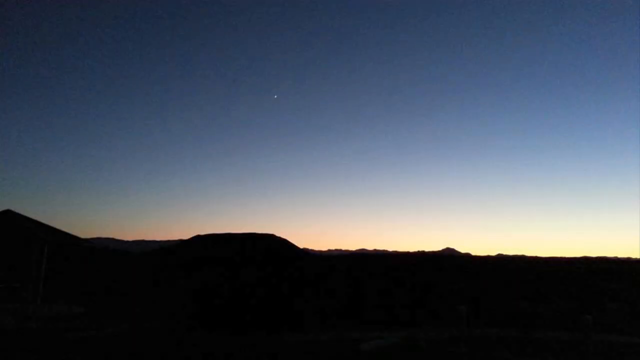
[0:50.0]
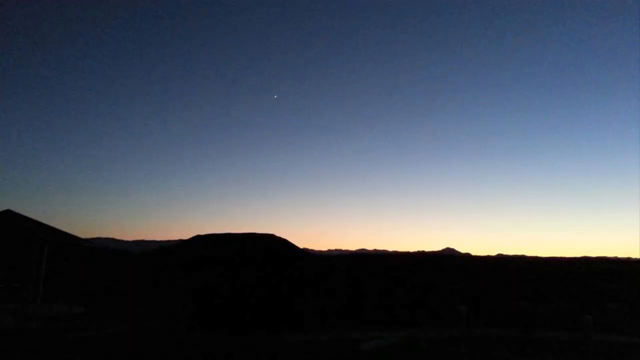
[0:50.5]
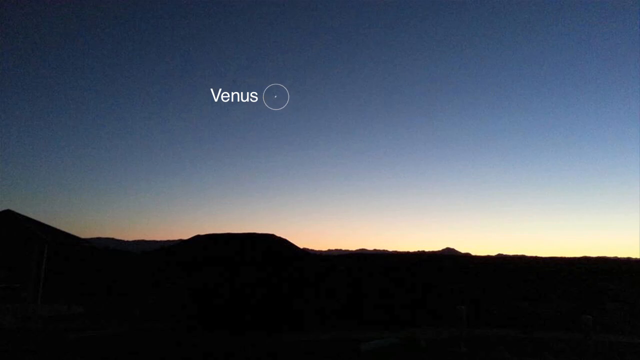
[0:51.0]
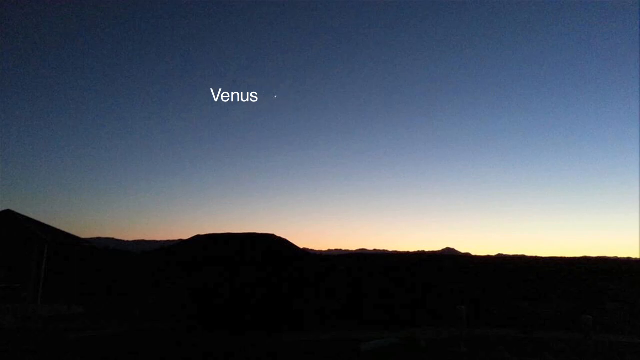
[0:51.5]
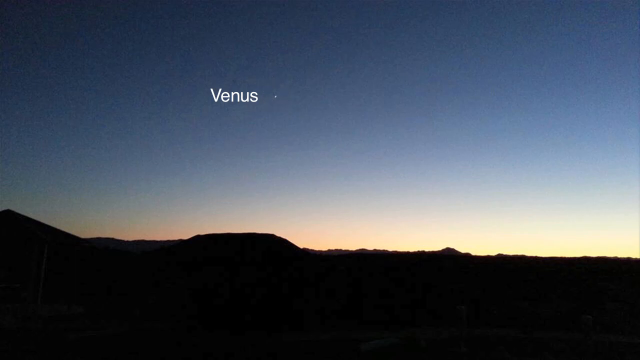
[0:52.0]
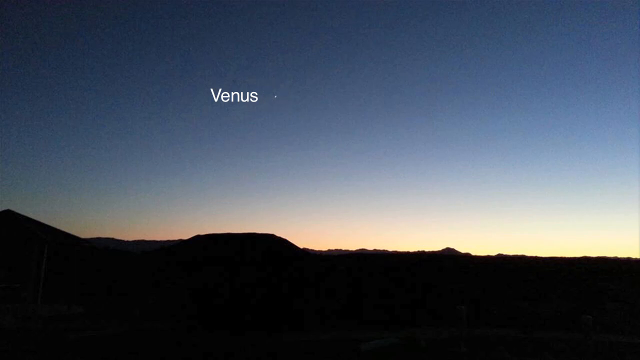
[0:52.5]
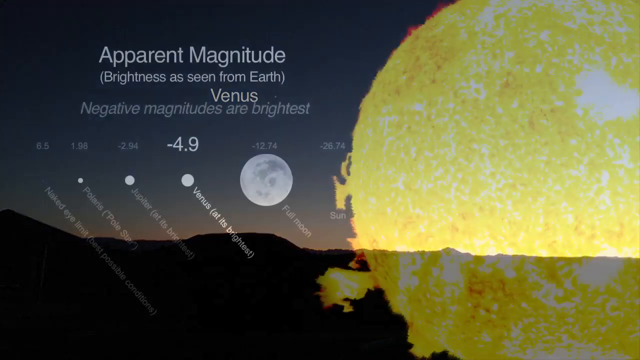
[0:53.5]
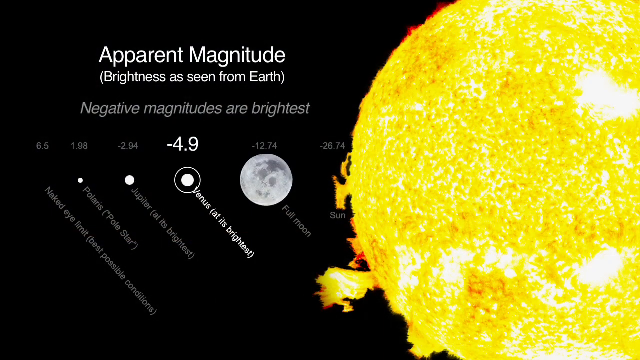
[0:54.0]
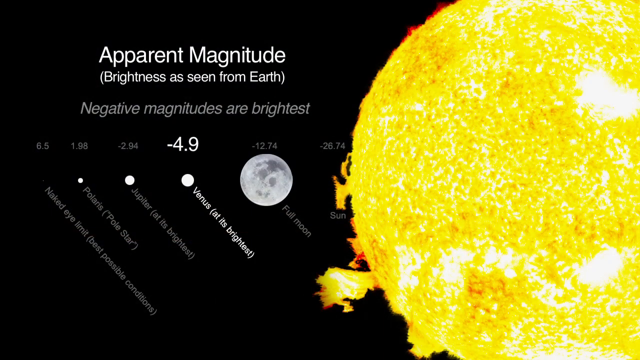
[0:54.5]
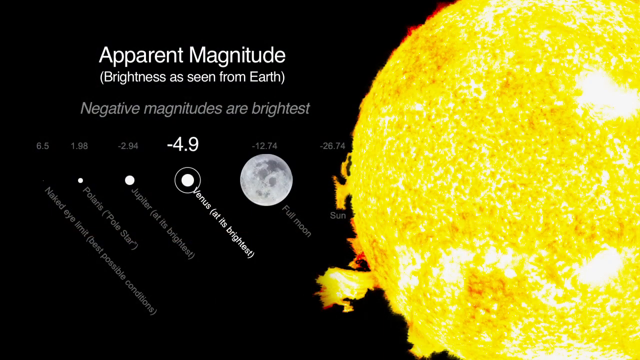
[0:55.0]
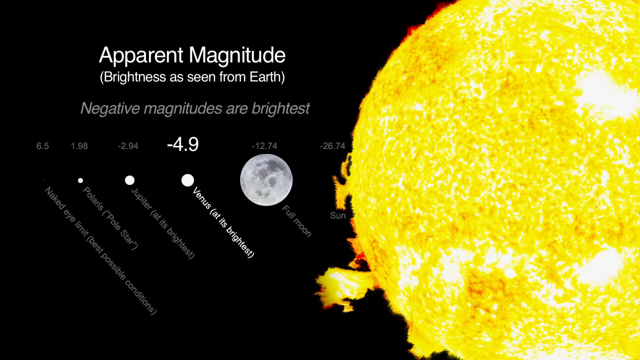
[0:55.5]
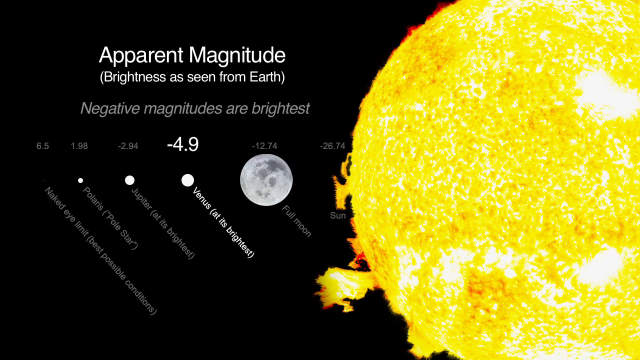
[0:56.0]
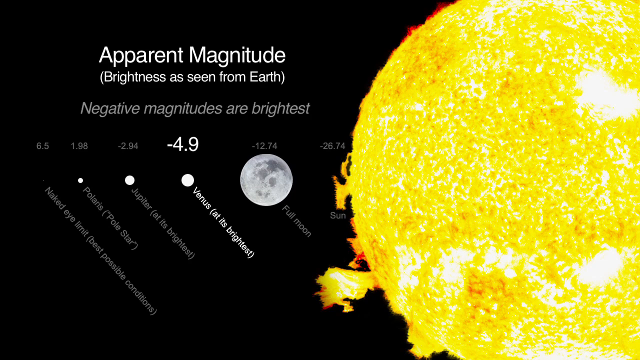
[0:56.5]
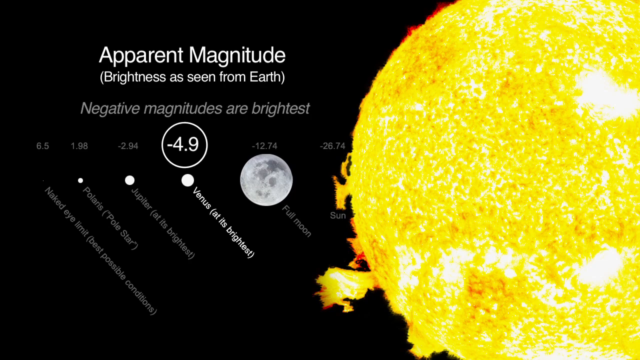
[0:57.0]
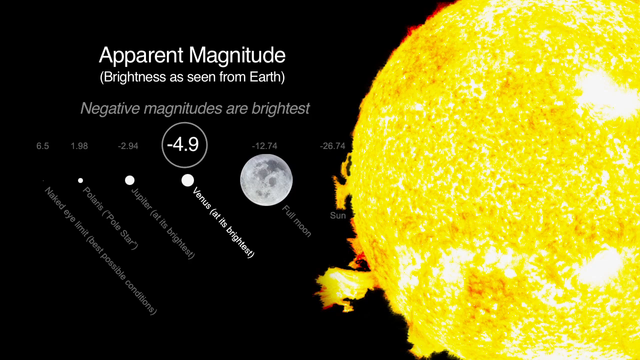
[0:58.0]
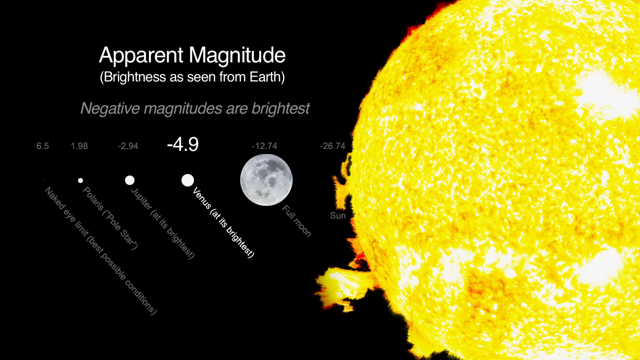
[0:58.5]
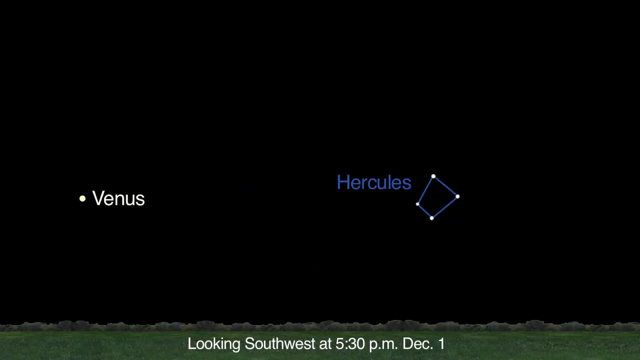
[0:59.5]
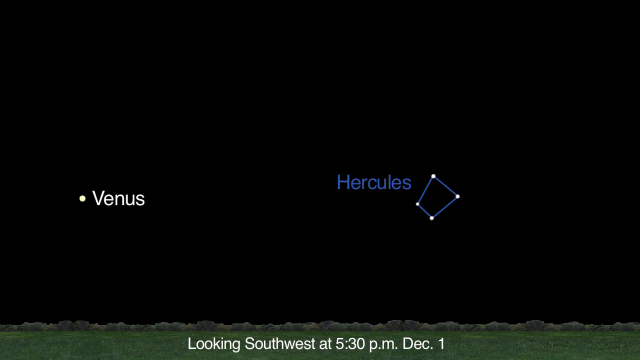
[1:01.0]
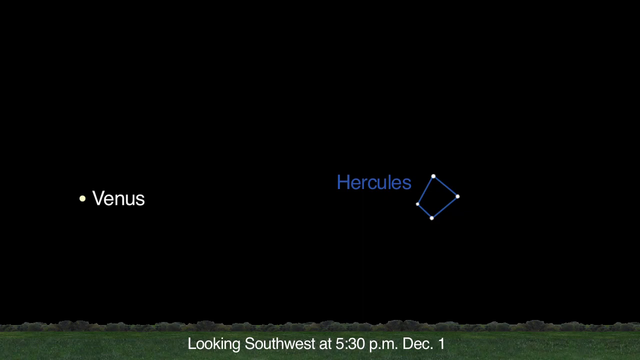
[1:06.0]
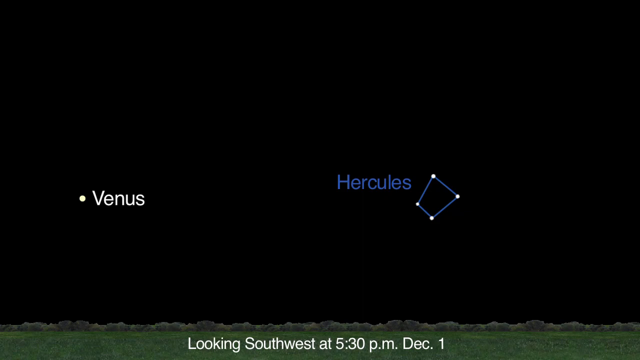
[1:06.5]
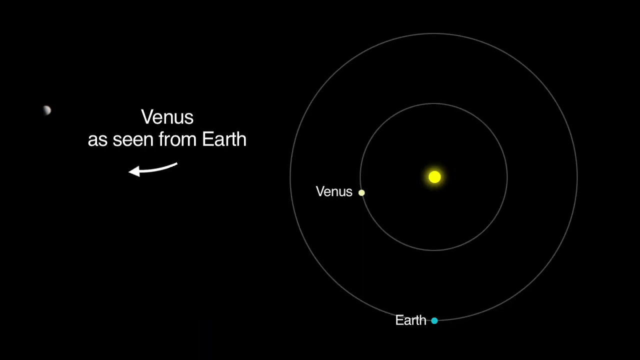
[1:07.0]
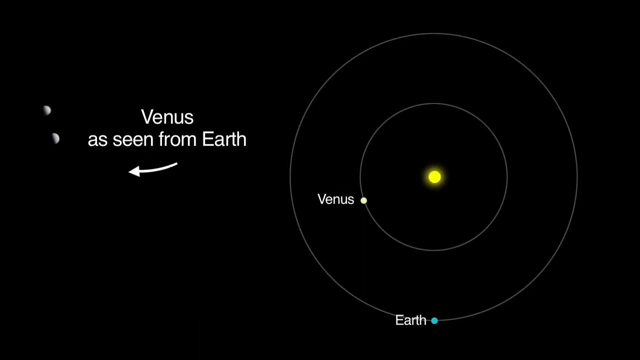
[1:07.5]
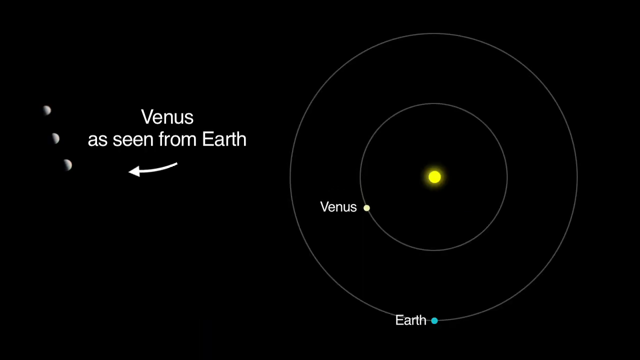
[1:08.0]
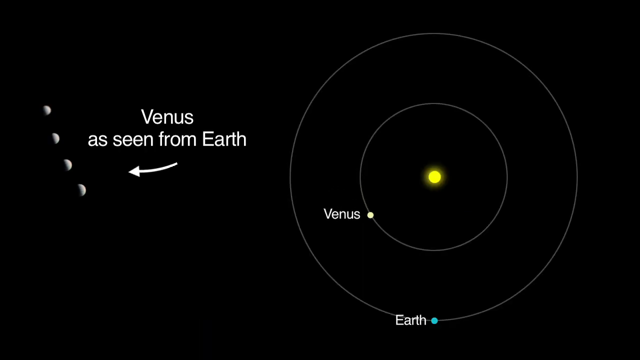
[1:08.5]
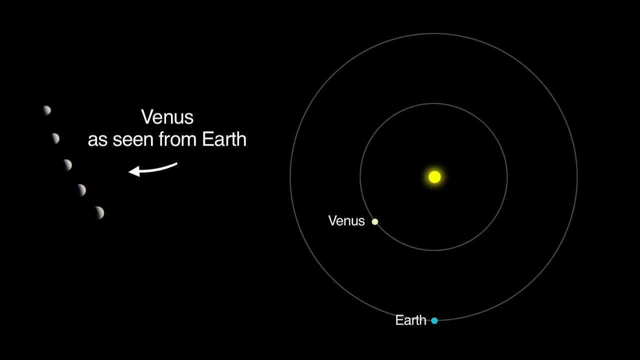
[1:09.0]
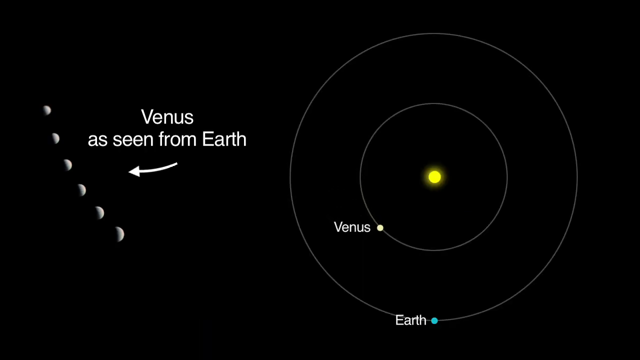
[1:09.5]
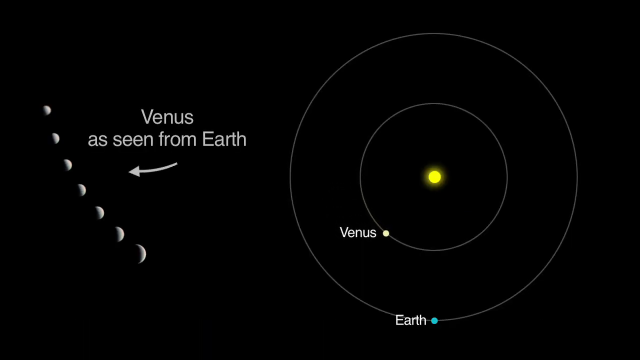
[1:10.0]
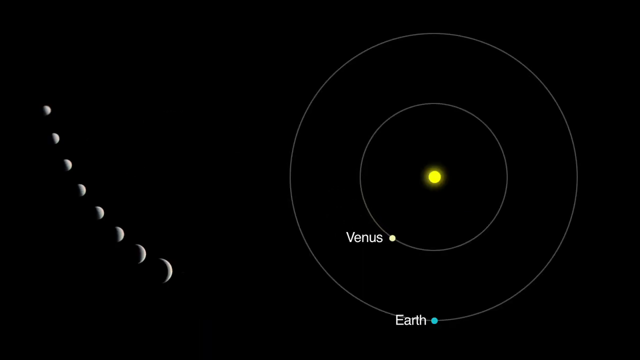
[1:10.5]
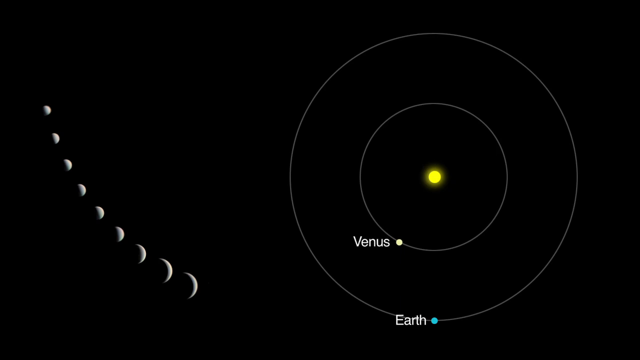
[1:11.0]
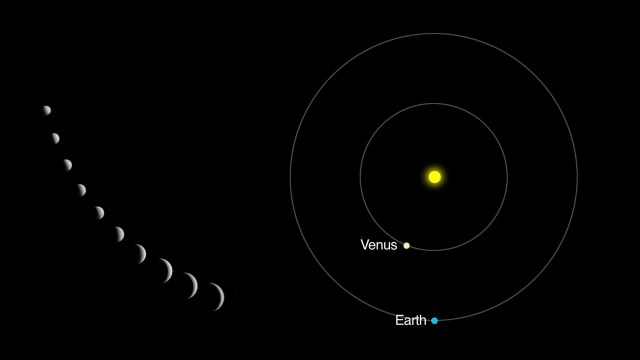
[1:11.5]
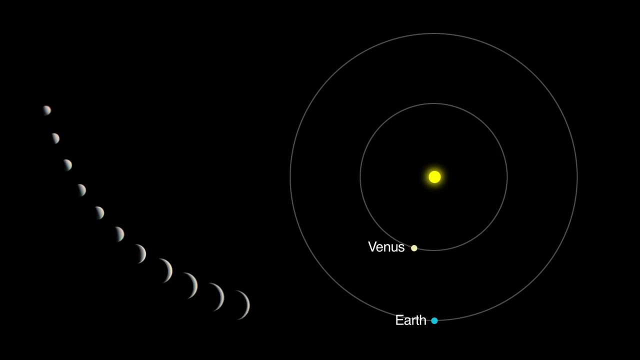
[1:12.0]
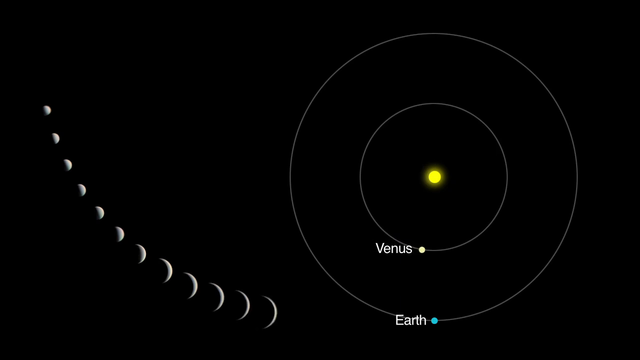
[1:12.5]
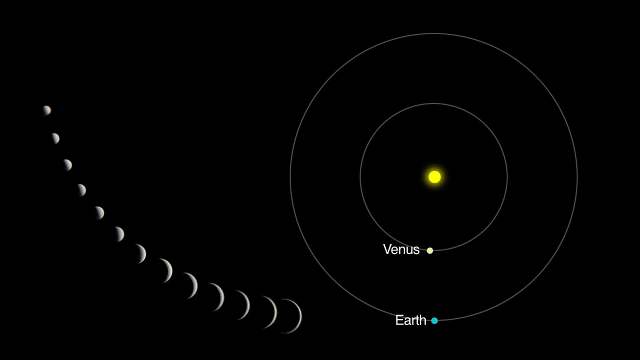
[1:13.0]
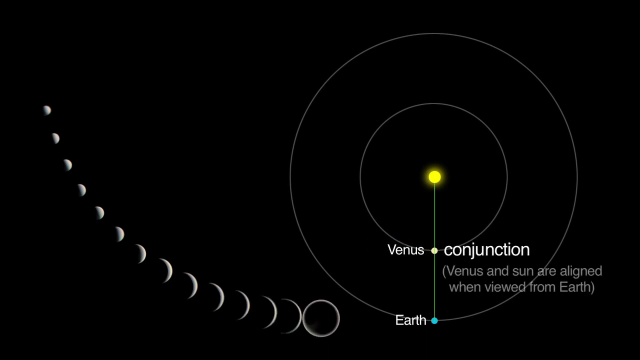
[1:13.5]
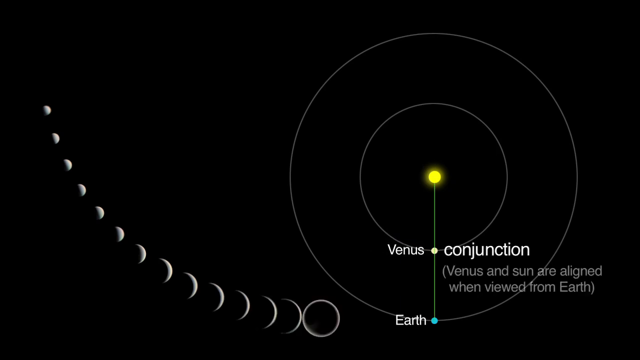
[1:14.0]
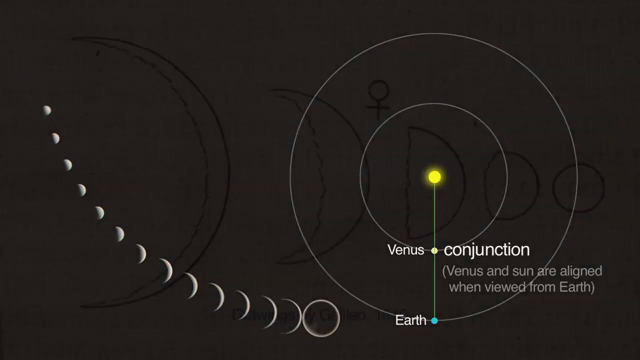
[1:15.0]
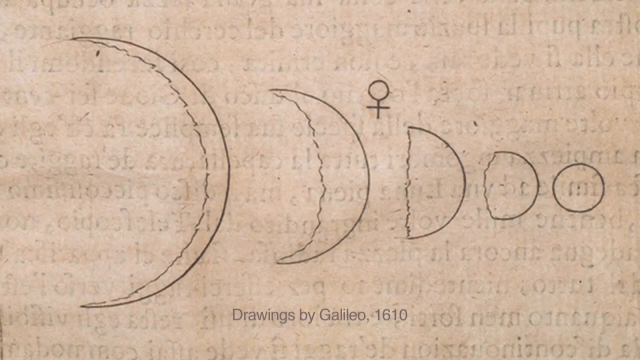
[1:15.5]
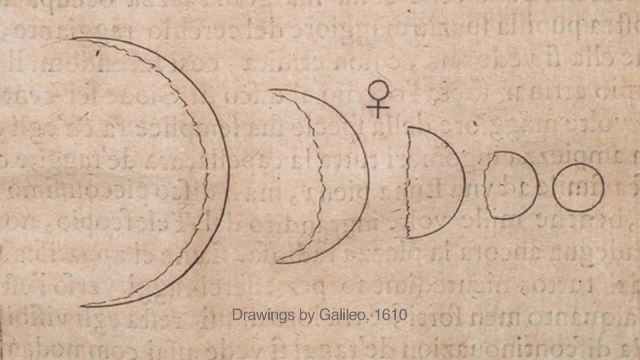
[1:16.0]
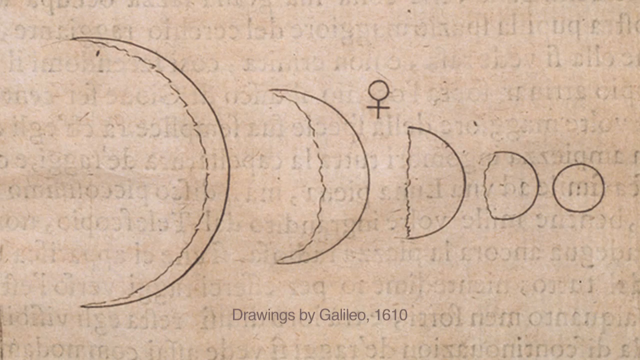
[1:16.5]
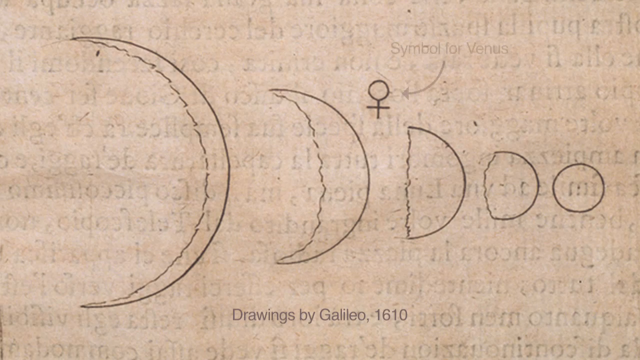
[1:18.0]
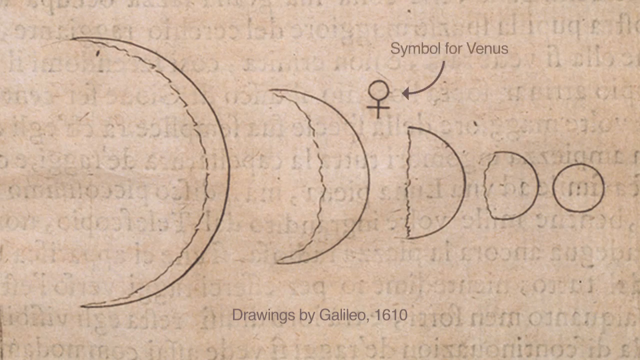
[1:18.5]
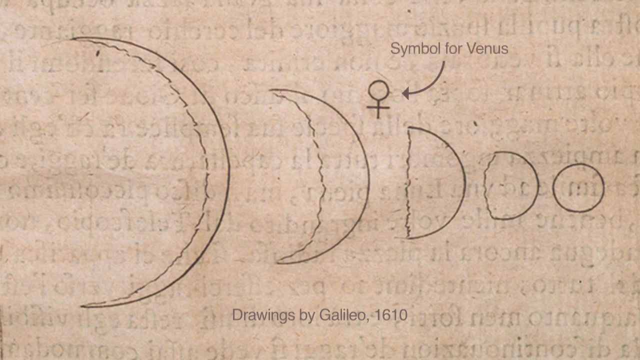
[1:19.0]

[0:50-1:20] Venus is shown with its apparent magnitude of brightness as seen from Earth. A graph of Venus and Hercules looking southwest at 5:30pm on December 1st appears, then Venus circling around the Earth, Venus in conjunction, and drawings by Galileo of 1610. The flat landscape returns with Venus in full view as a small white star. It could be a sunset. The sky is dark blue with multiple layers of color: dark blue, light blue and yellow, with what looks like orange and pink. The landscape itself is dark black.